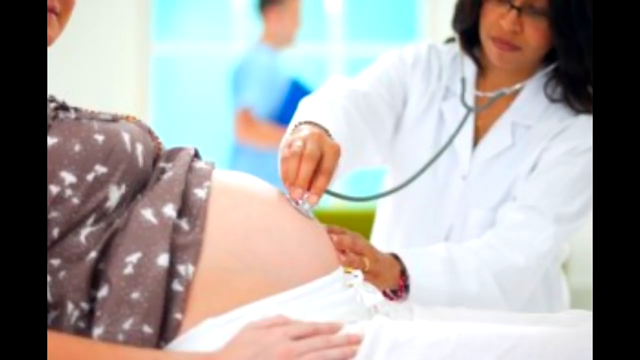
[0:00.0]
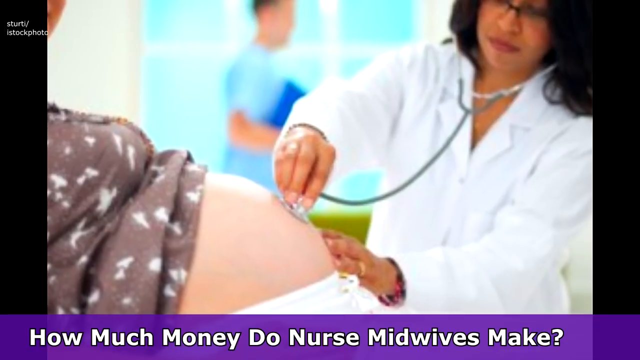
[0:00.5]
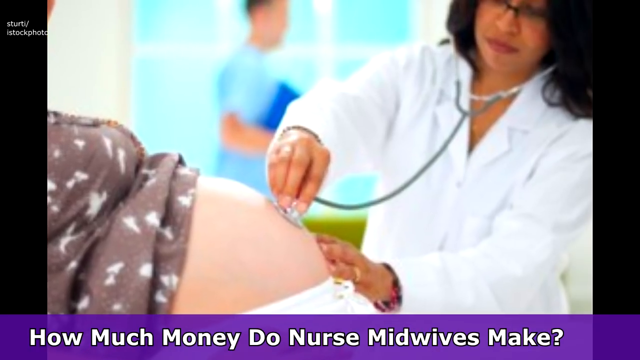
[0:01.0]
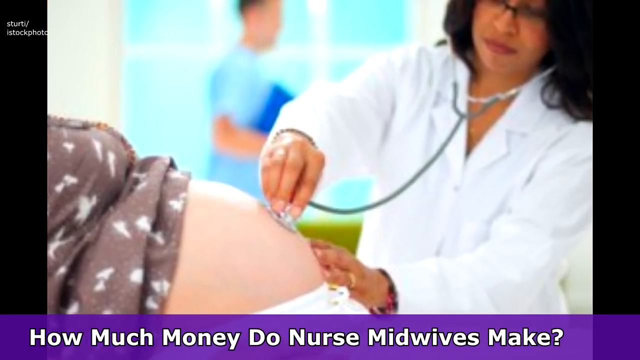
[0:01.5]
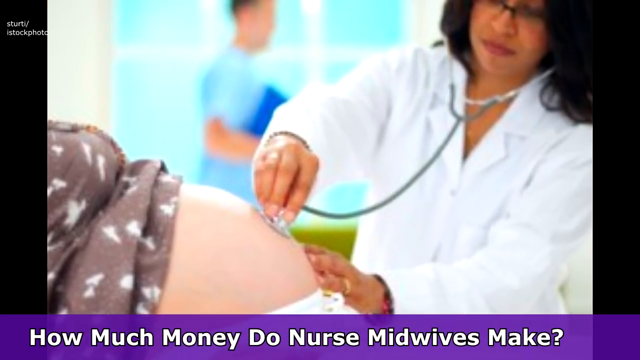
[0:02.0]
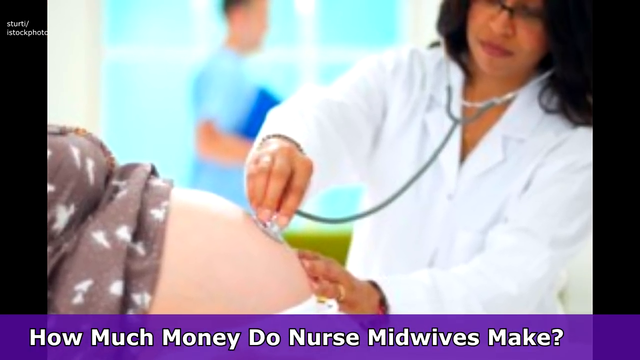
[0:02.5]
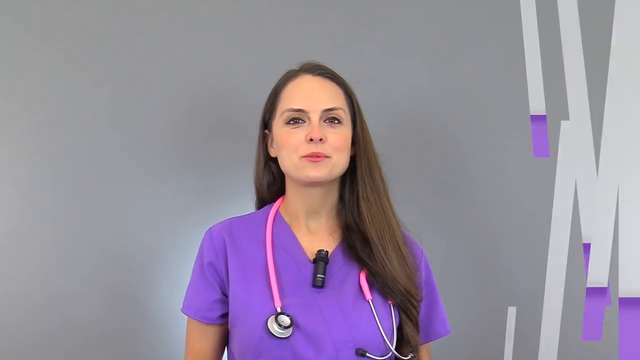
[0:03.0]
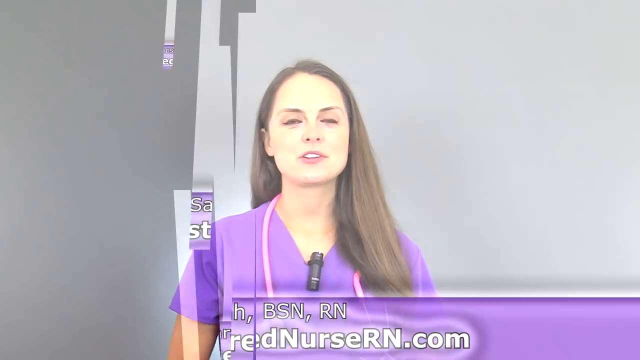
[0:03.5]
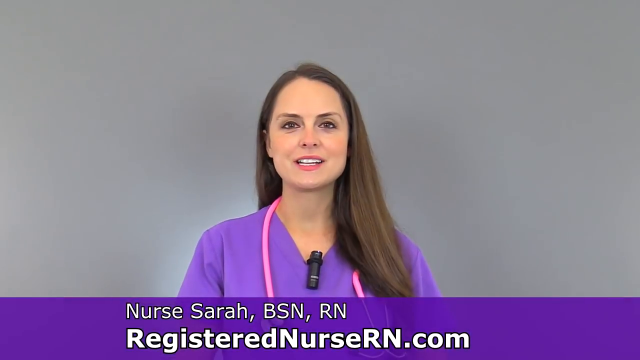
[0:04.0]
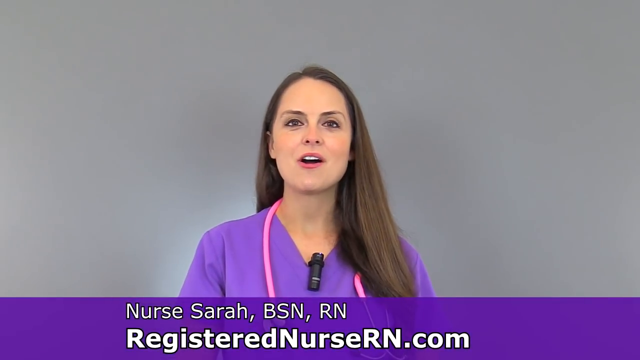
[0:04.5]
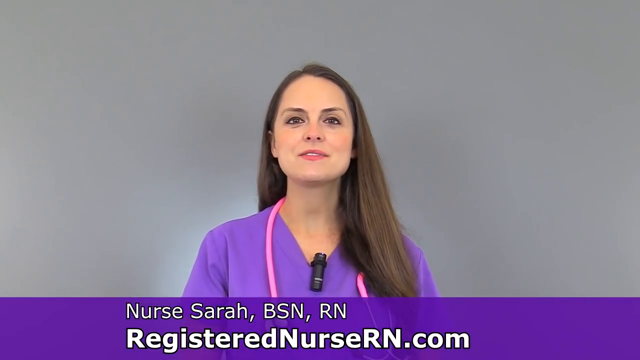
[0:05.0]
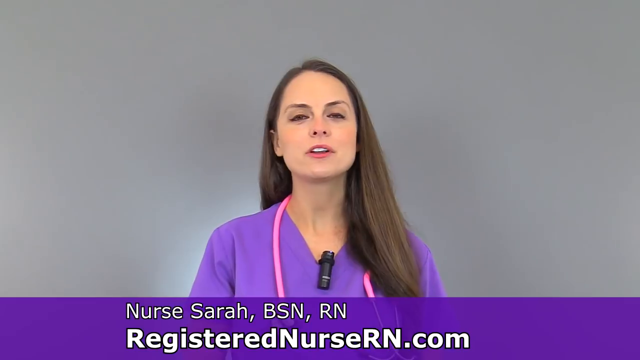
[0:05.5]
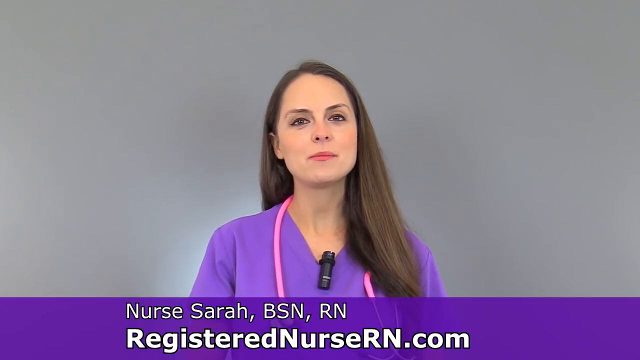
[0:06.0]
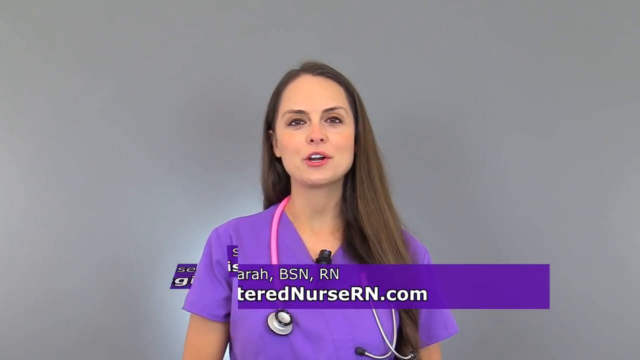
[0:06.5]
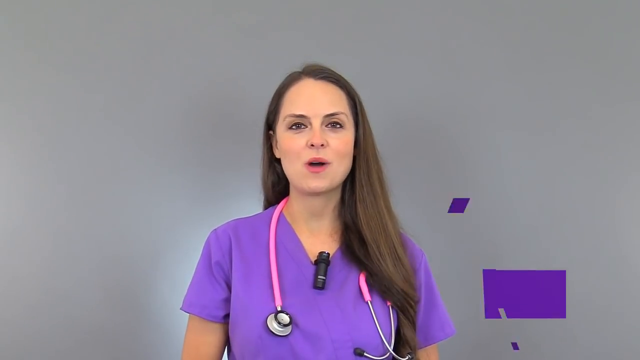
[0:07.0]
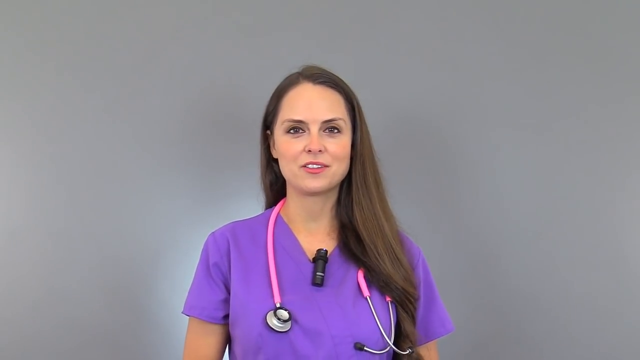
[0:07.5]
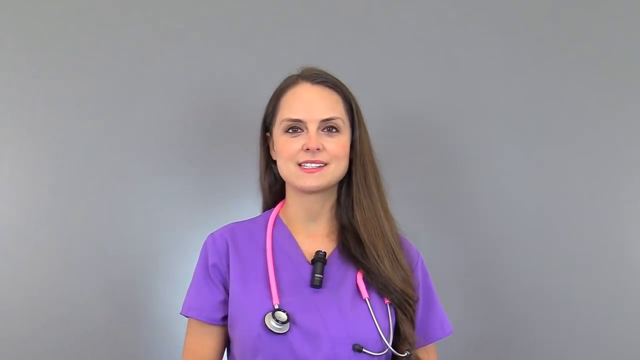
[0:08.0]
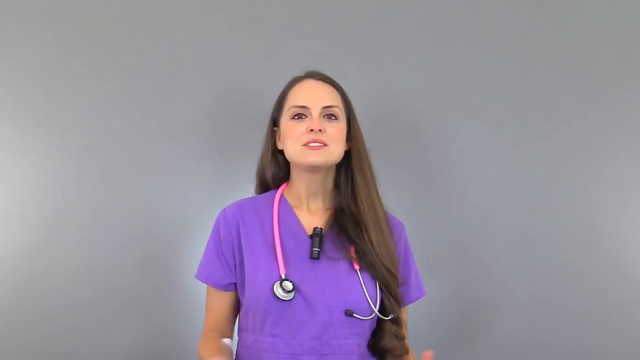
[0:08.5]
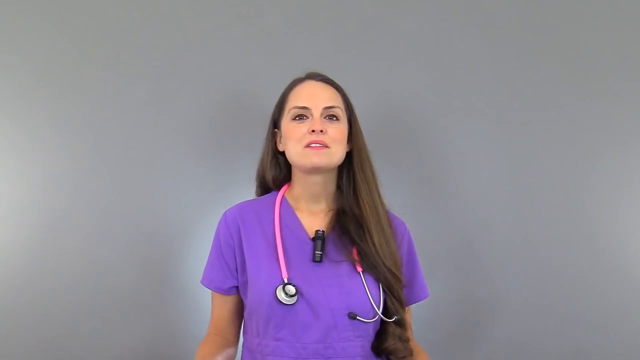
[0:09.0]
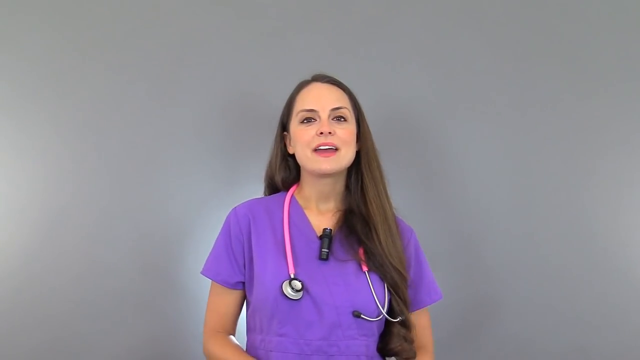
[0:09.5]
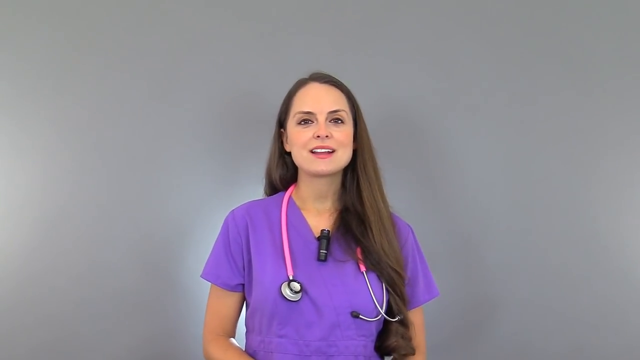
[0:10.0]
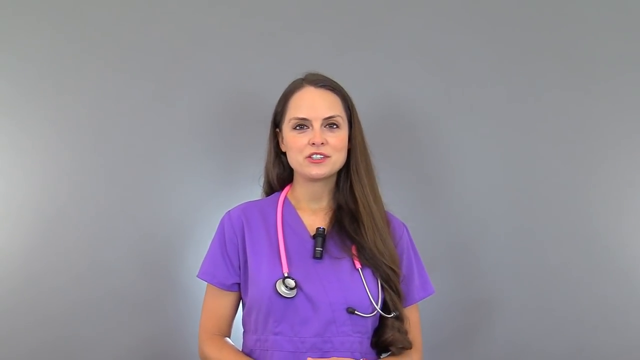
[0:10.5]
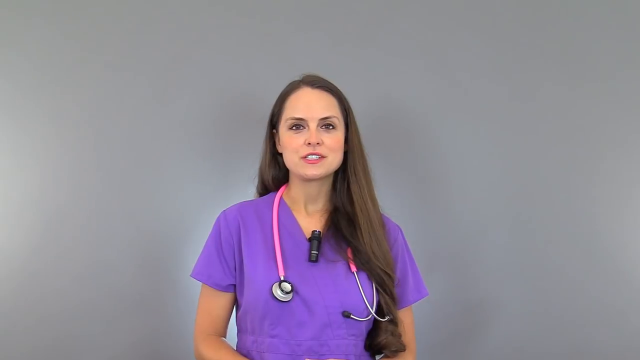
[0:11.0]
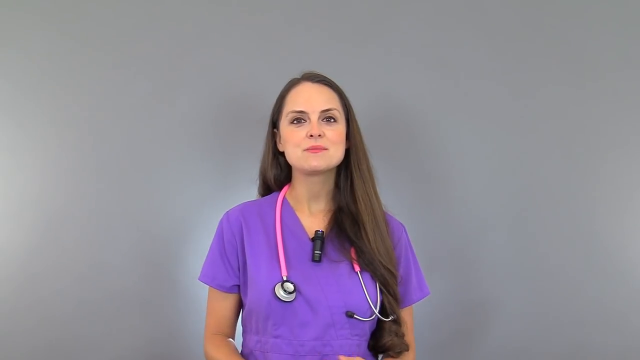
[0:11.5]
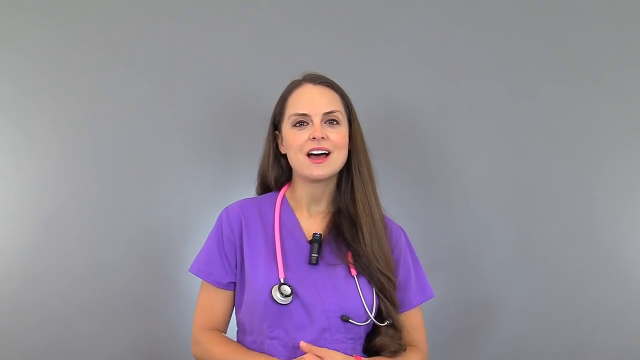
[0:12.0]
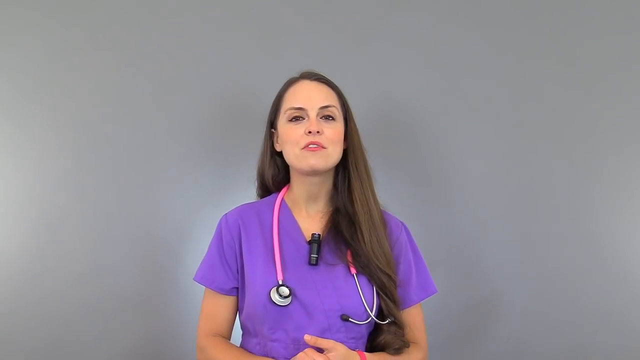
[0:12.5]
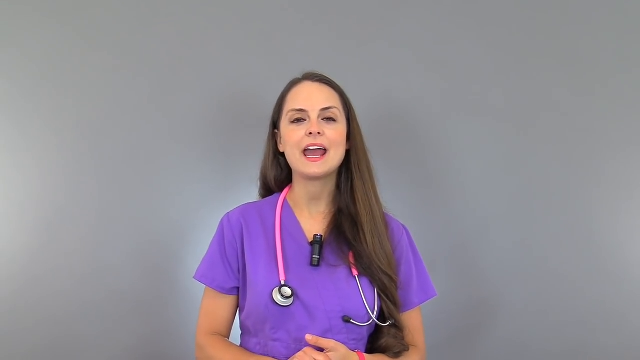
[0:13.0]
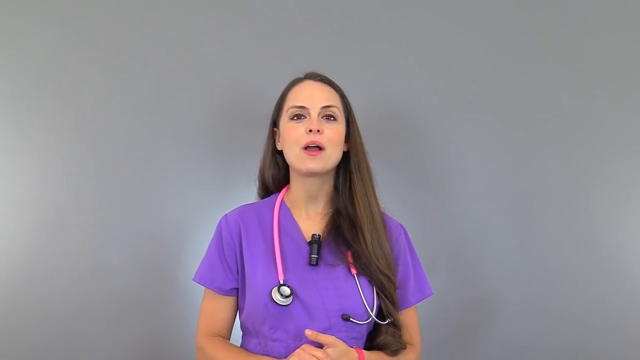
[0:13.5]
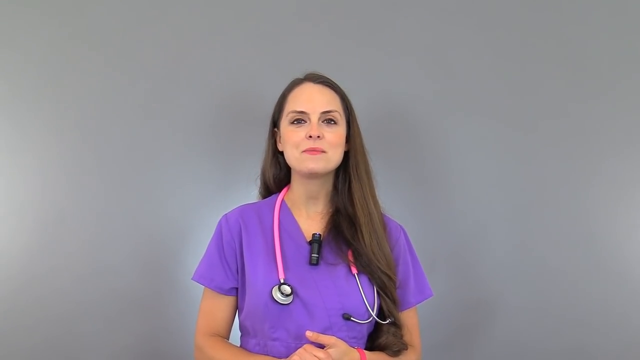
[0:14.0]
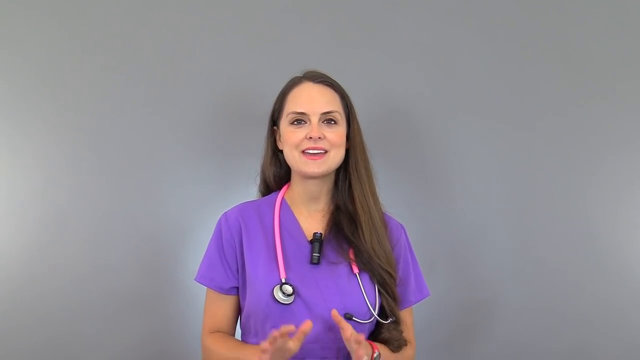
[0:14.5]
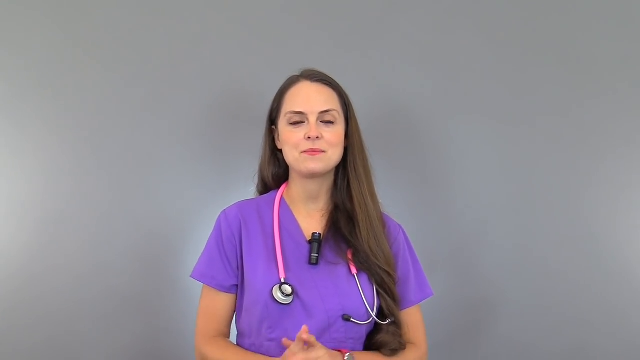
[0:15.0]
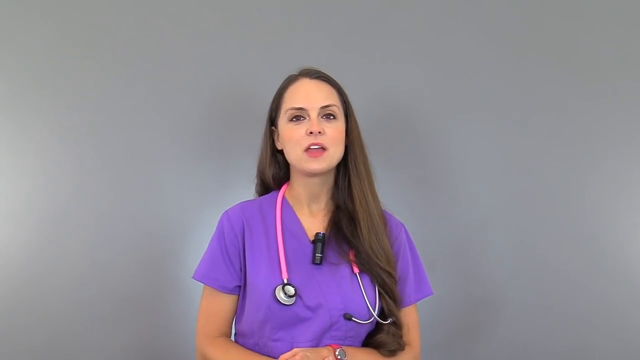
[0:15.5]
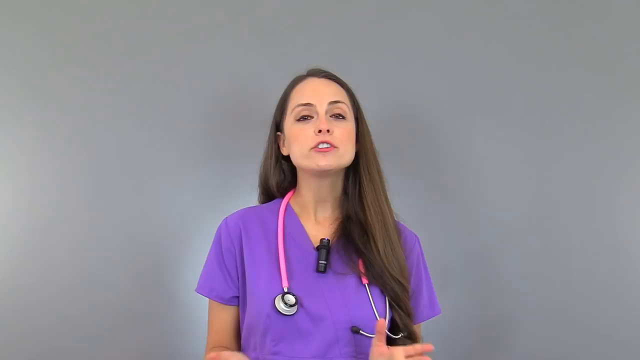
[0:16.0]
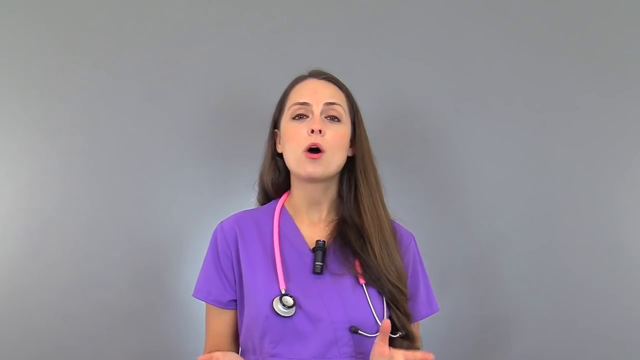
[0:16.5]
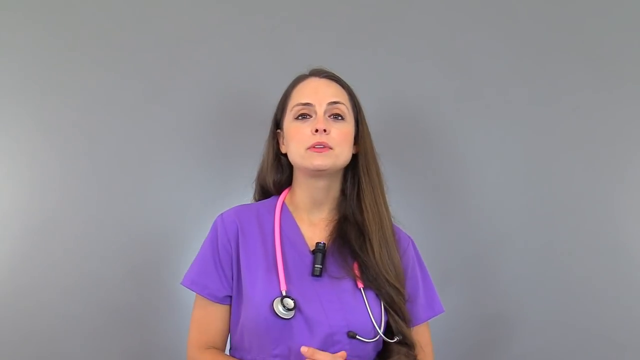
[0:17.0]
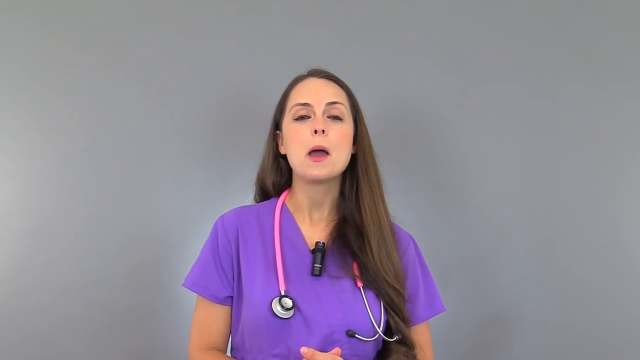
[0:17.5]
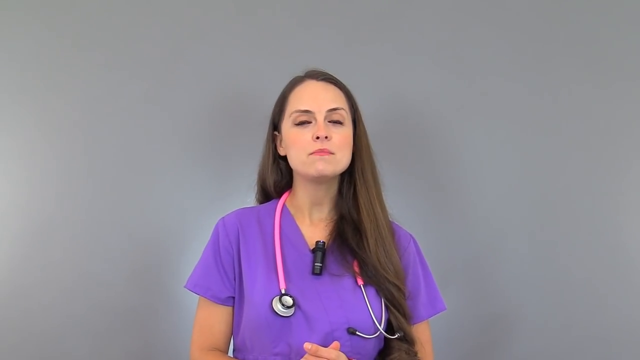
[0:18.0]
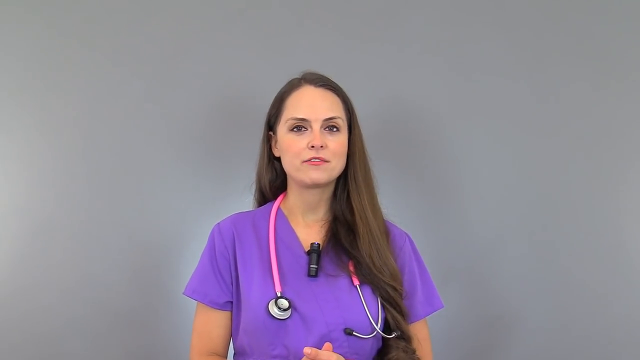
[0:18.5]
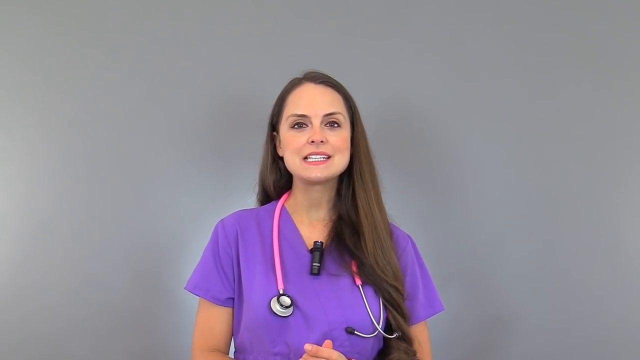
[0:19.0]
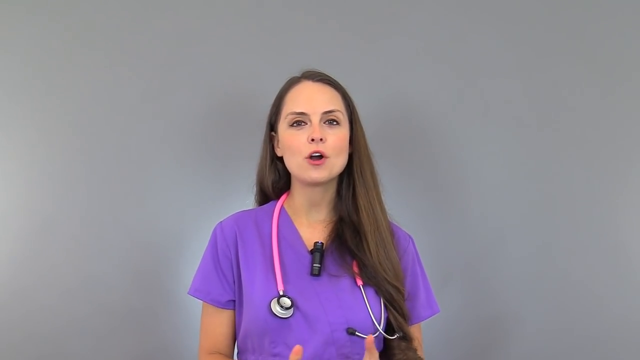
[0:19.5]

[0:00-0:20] A woman on the right side of the frame, with long dark hair and eyeglasses, has a stethoscope in her ears with gray tubing, and its diaphragm is on a pregnant belly. She wears a wedding band on her left ring finger. In the background, a person in a blue top walks by carrying a dark blue object. The pregnant belly belongs to a person on the left side of the screen, who wears a gray and white shirt hiked up over the belly but still covering the breasts; only the patient's left cheek and half of the lips are visible, and the right hand rests by the right hip. A dark blue-purple banner at the bottom of the screen reads in white: "how much money do nurse midwives make?" The screen changes to a gray background with a young woman with long dark hair, wearing a purple scrub top, with a pink stethoscope around her neck. A purplish blue banner at the bottom reads "Nurse Sarah BSN RN, registerednursern.com." A microphone is at the V point of her scrub top's neckline, and she talks toward the camera. The banner shatters away, and the nurse keeps speaking toward the camera, smiling and gesturing with her hands in a sort of palms-together motion.